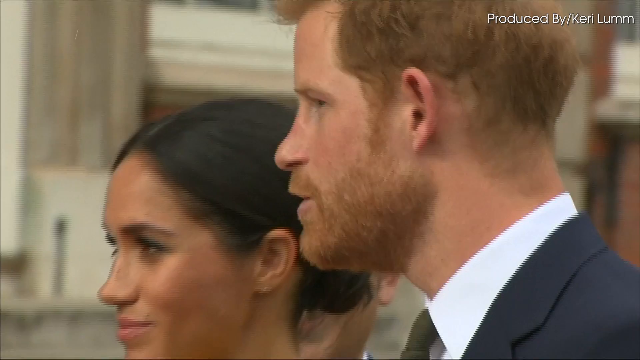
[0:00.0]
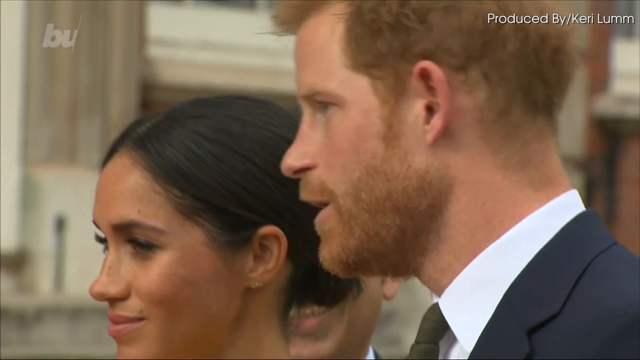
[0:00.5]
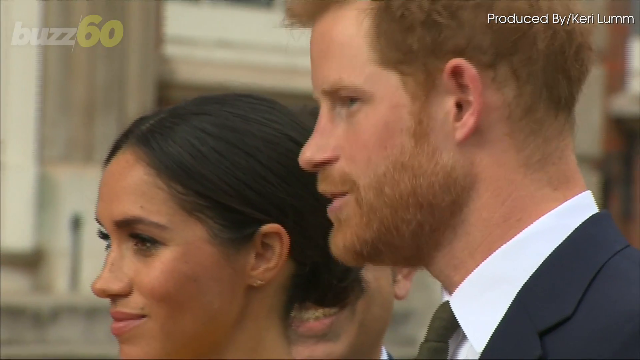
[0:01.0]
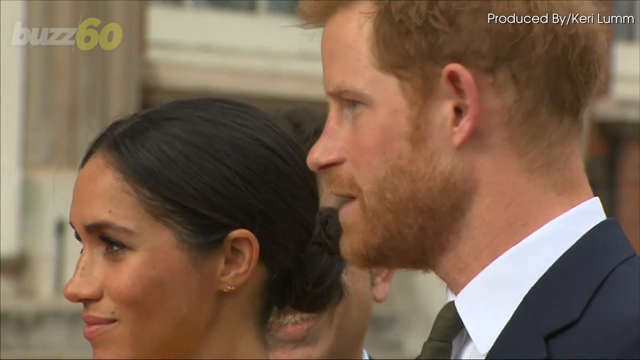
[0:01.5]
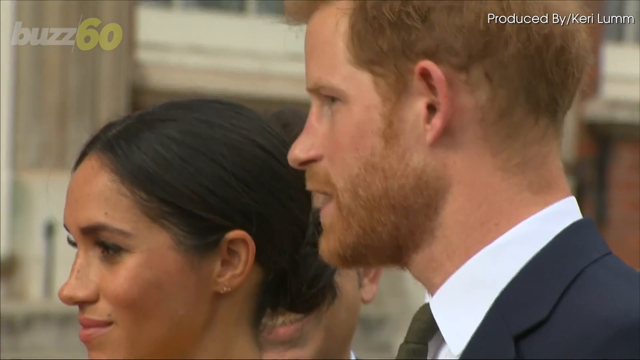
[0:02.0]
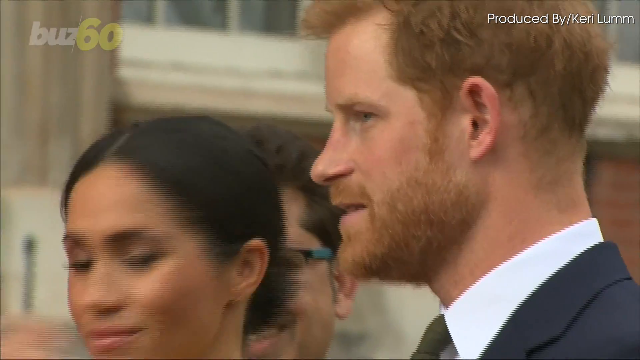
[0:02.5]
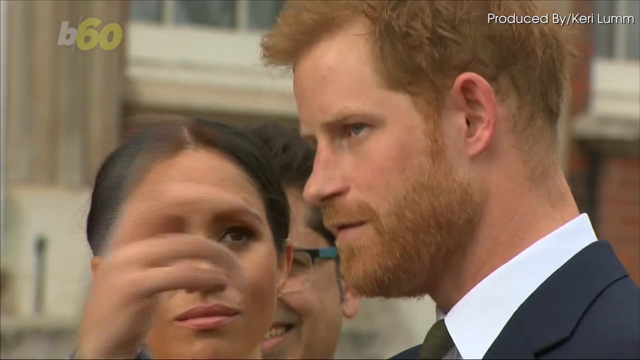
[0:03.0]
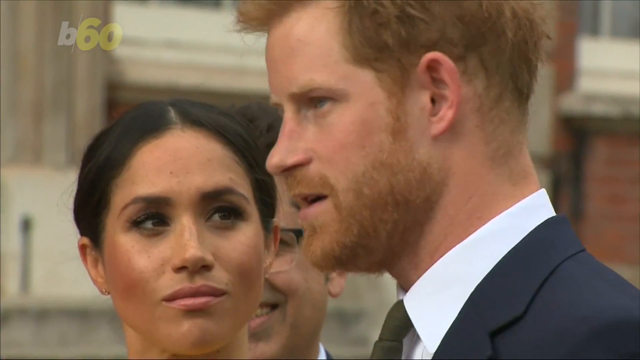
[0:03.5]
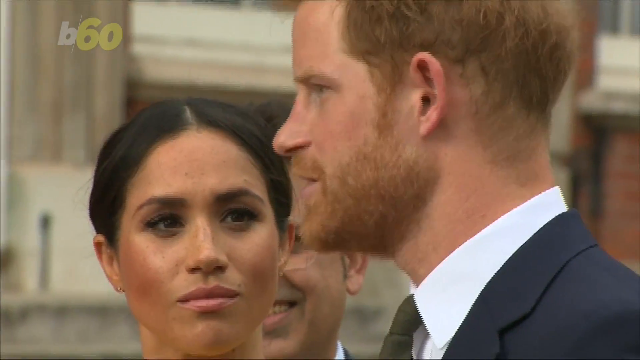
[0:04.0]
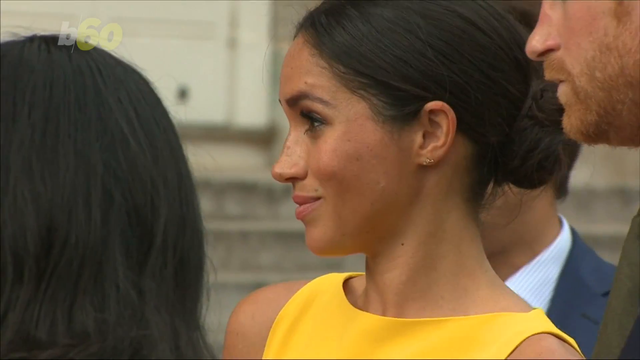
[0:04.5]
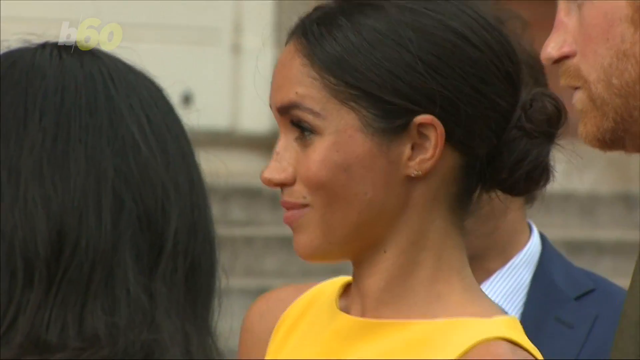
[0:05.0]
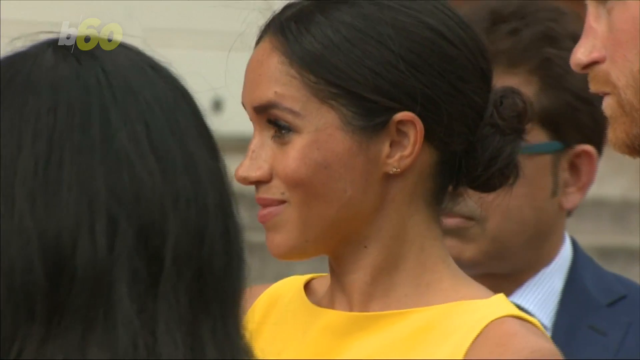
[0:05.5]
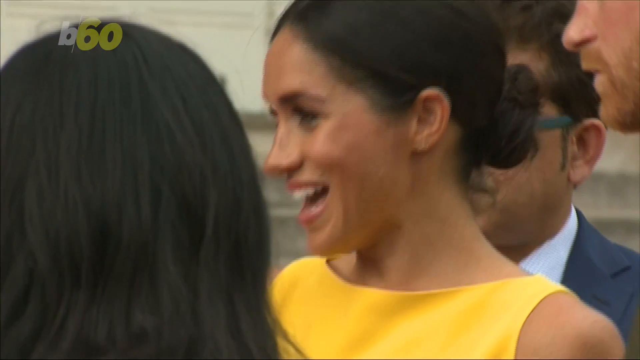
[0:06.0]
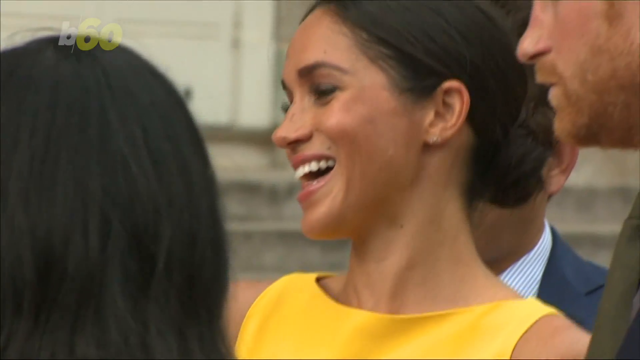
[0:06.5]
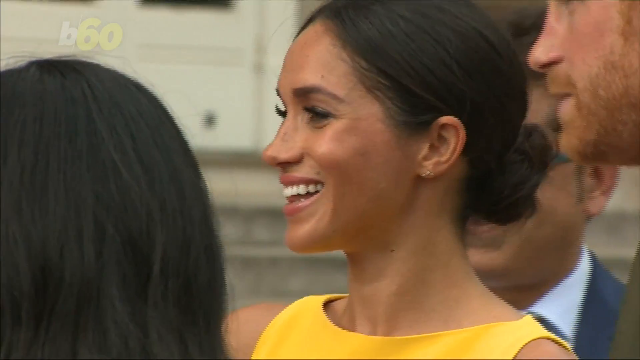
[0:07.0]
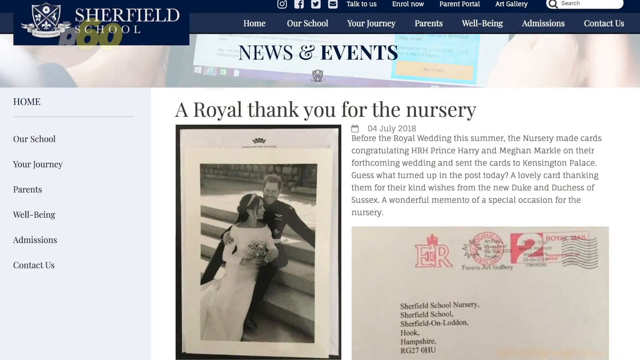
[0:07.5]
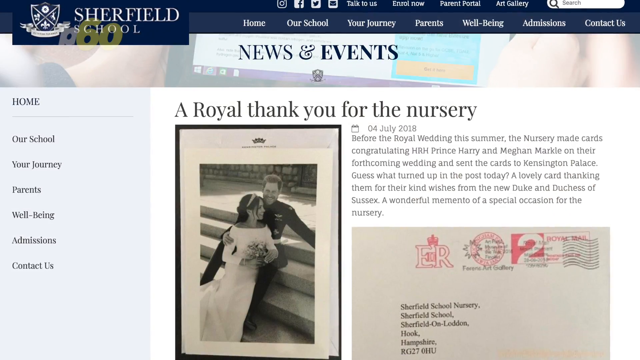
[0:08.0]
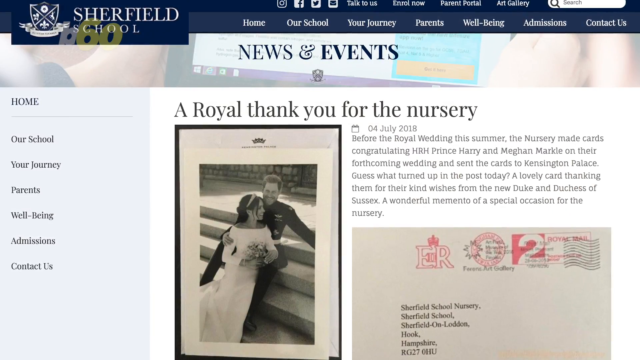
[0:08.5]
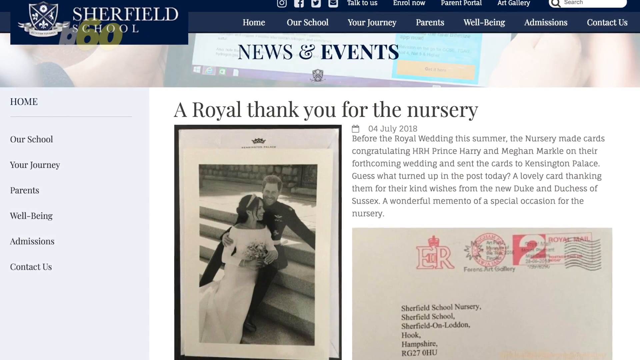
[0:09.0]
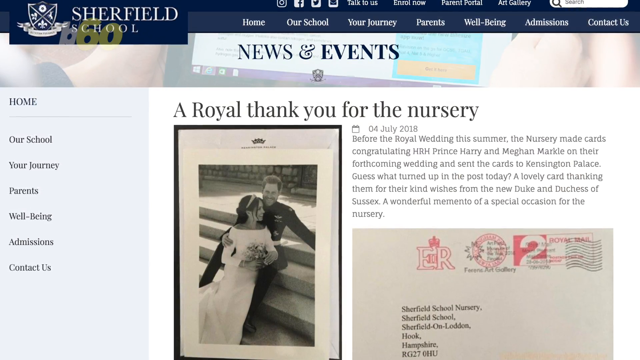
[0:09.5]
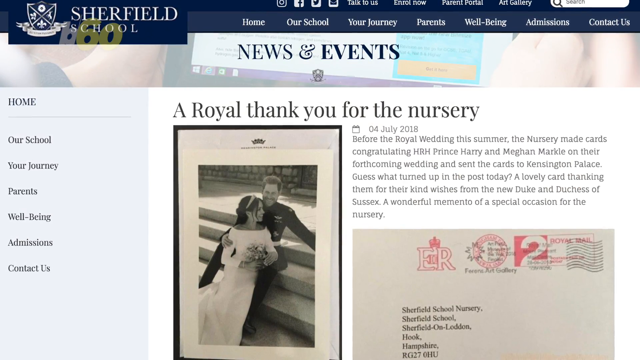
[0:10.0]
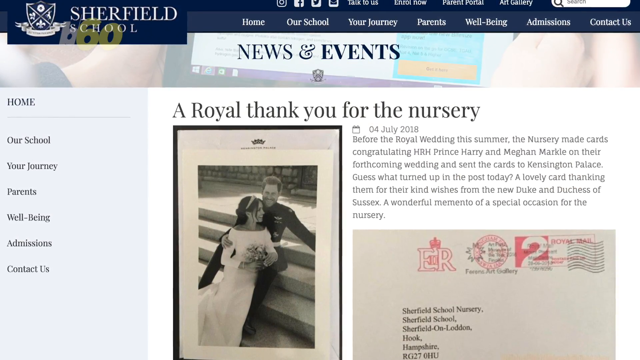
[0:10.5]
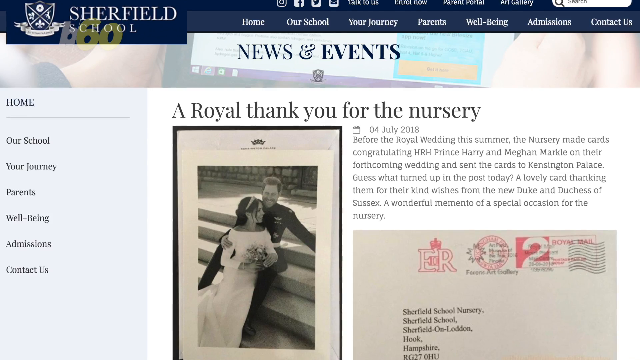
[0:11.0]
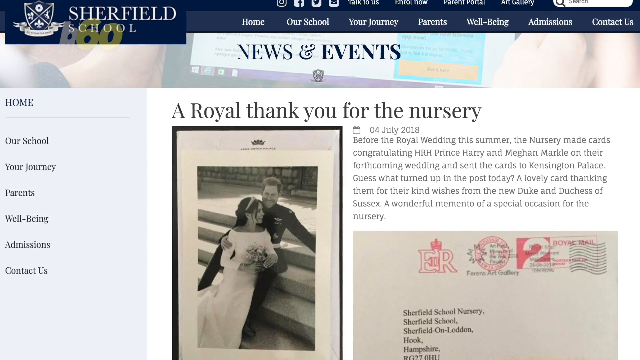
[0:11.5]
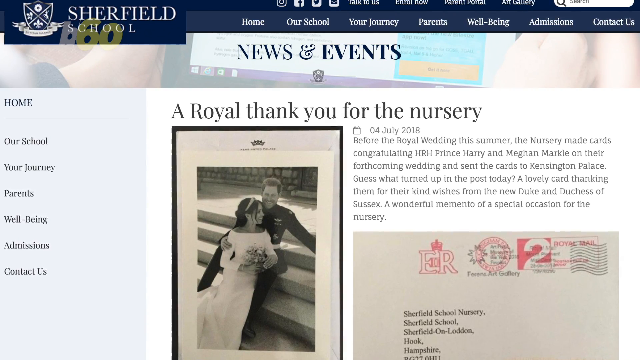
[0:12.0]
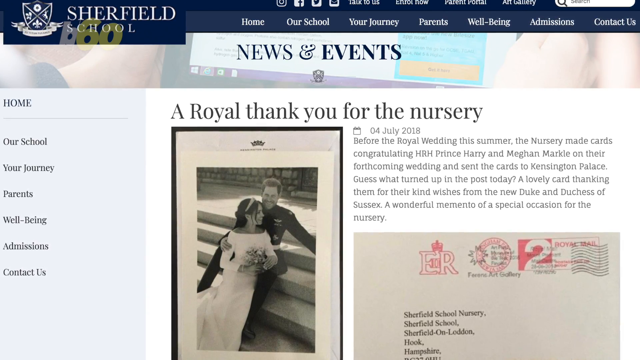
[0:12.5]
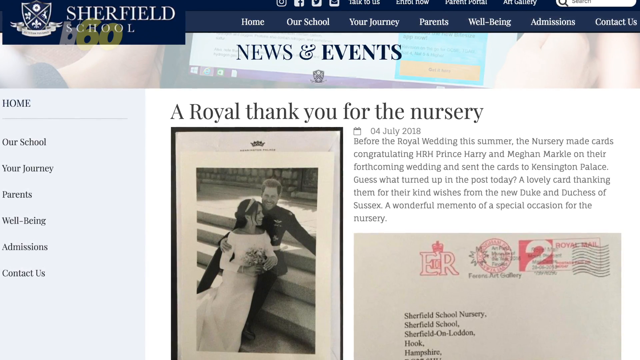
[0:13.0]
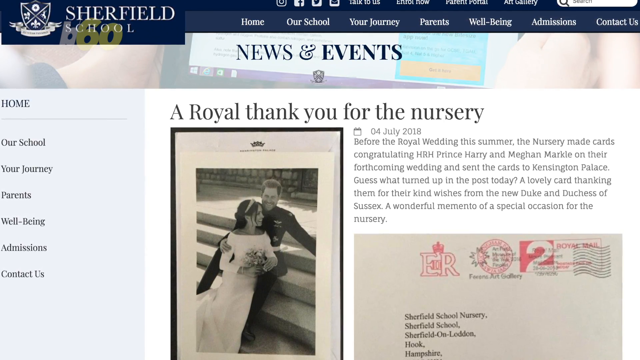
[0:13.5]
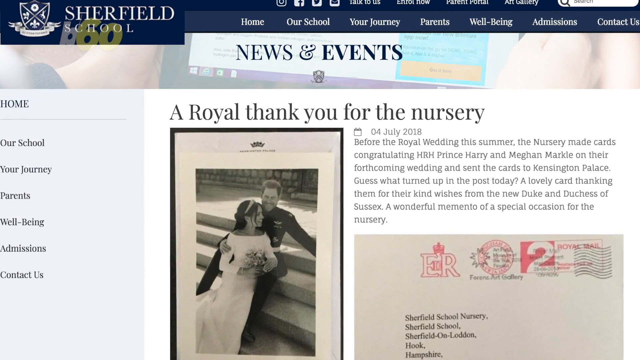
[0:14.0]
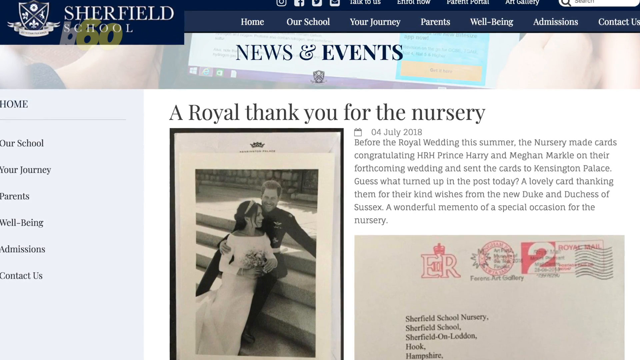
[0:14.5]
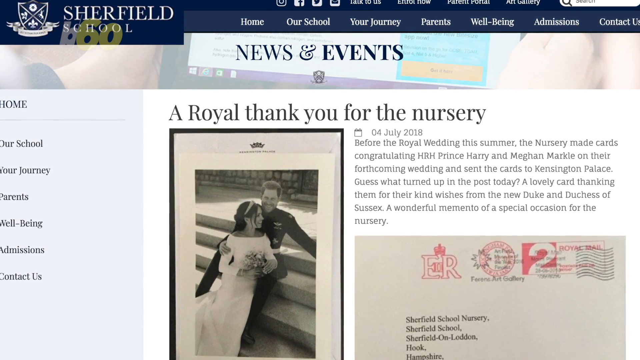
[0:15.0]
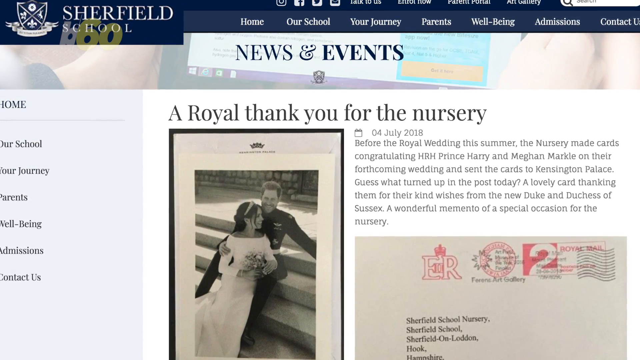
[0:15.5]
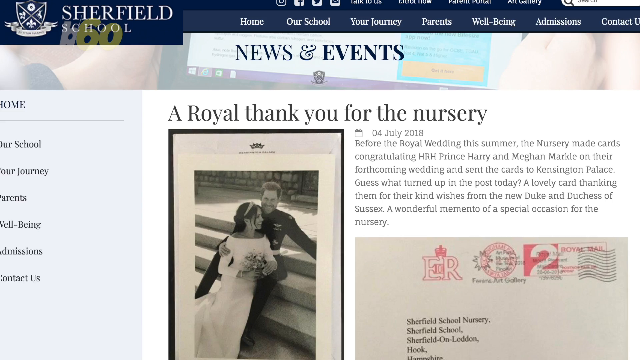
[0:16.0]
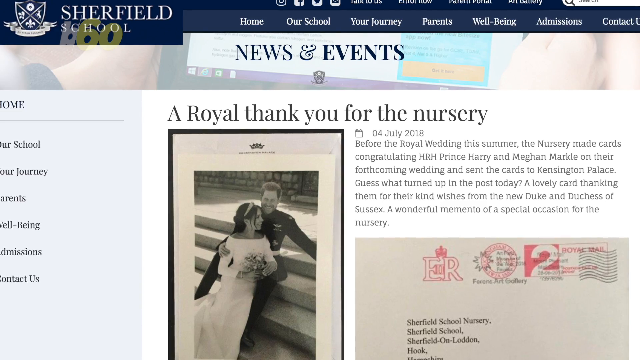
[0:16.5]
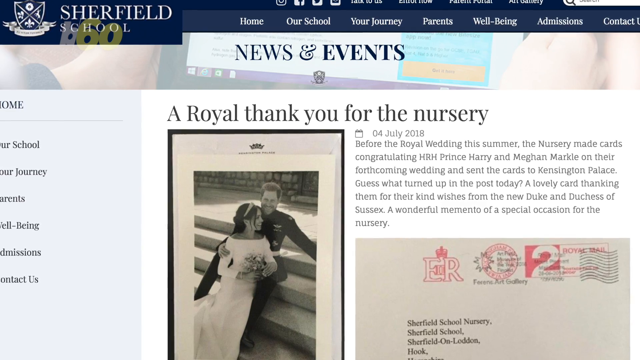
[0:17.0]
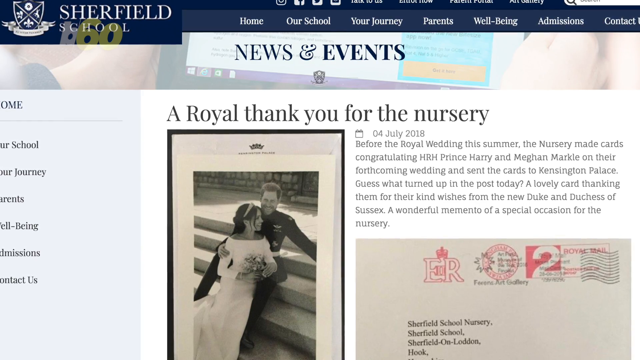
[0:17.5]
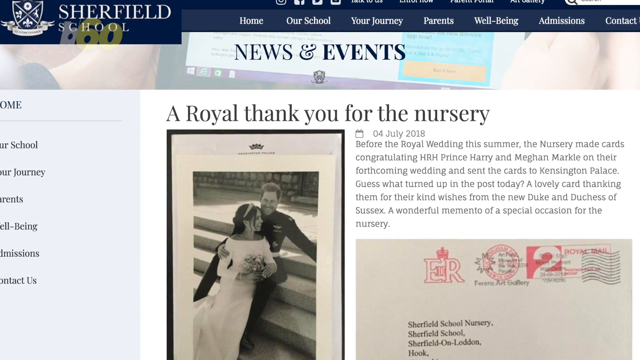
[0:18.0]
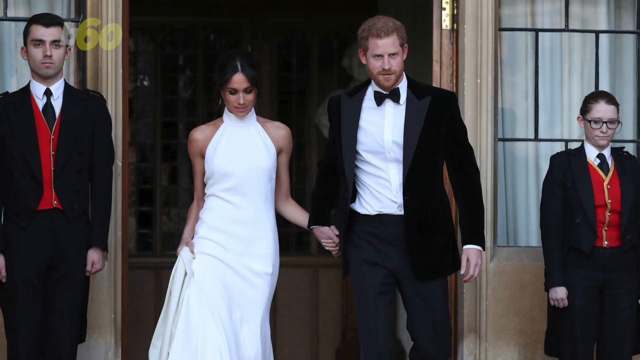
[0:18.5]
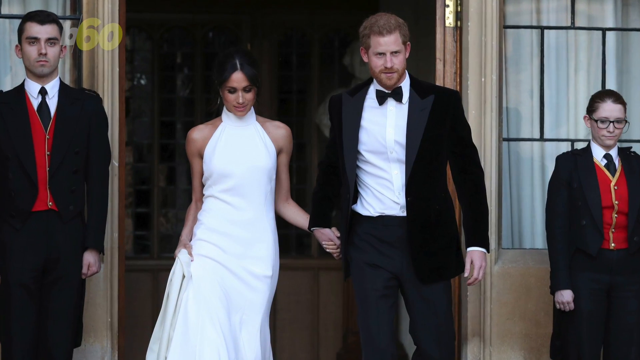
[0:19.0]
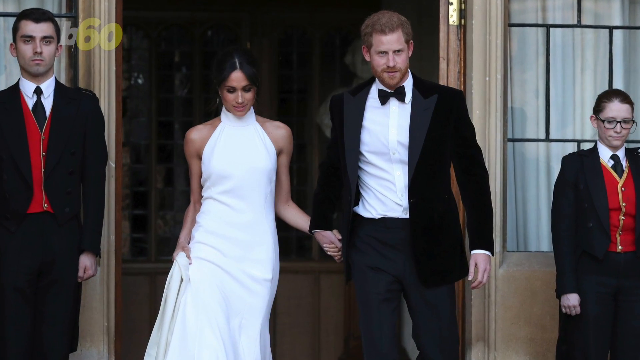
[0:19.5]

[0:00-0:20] A man who appears to be a British royal family member is on video, perhaps doing an interview alongside his wife, a young woman; the pair look like Prince Harry and Meghan Markey. The video cuts to an event they are involved in, possibly a wedding. They seem to be covered by Buzz 60, and the video appears to be about "a royal thank you for the nursery," apparently the prince and his wife thanking the public for their support.